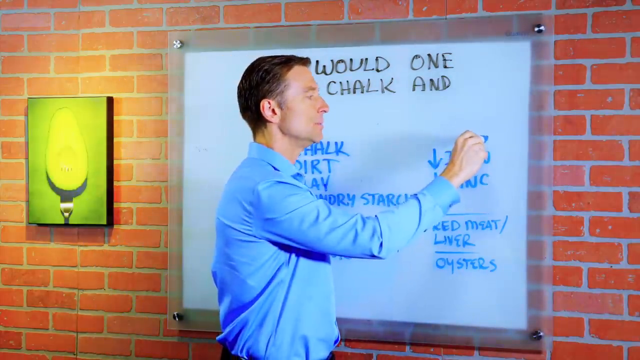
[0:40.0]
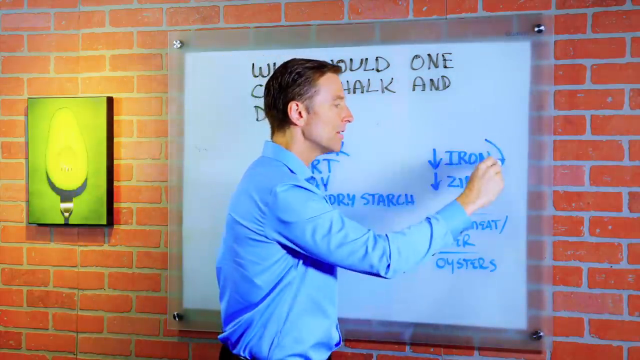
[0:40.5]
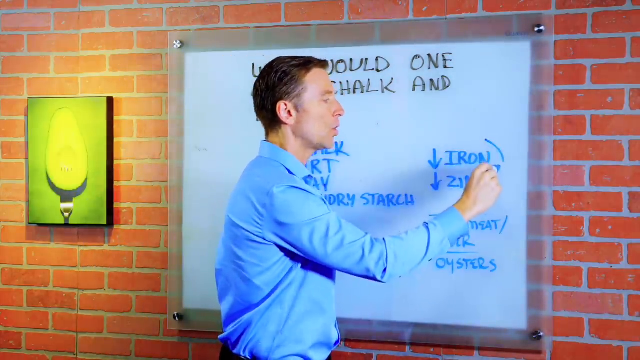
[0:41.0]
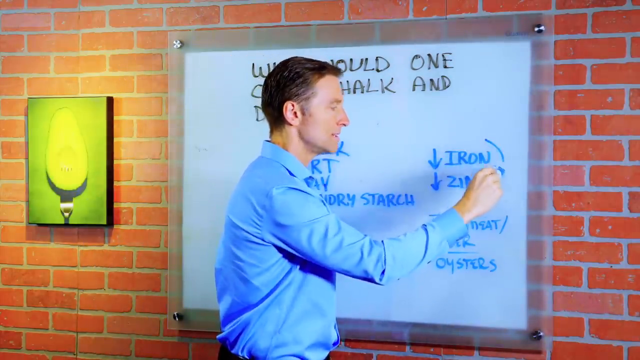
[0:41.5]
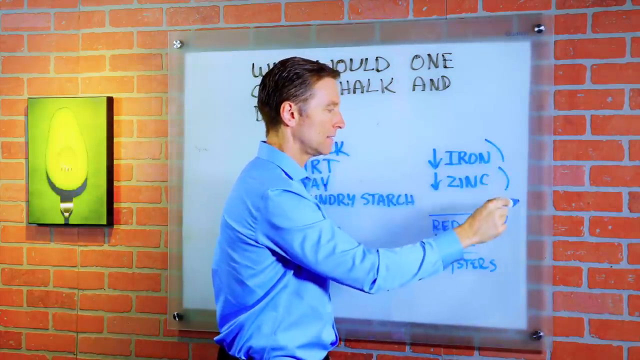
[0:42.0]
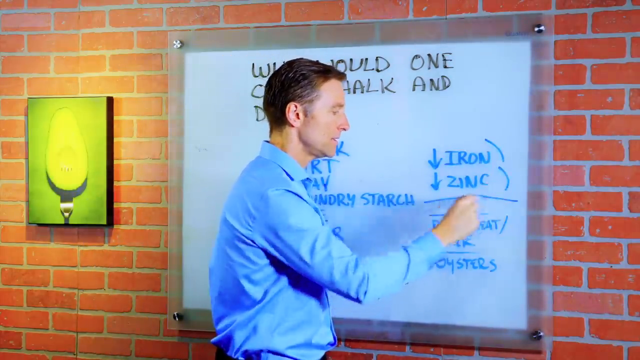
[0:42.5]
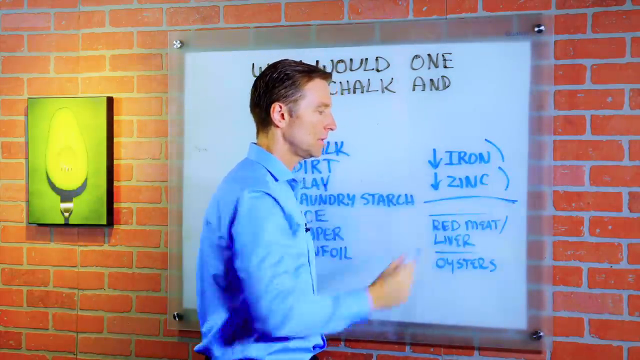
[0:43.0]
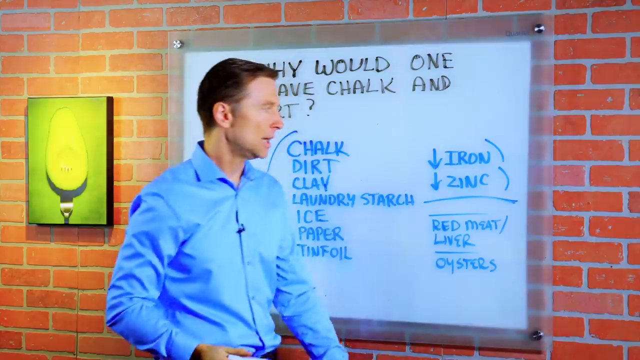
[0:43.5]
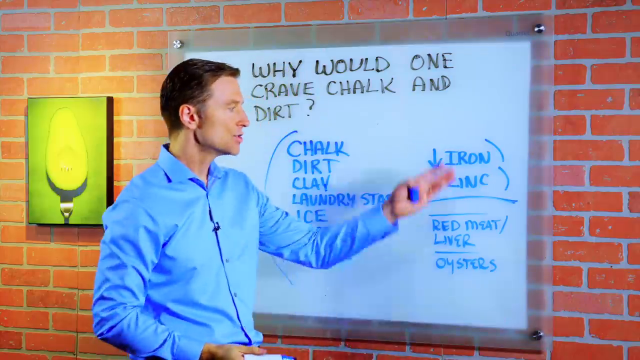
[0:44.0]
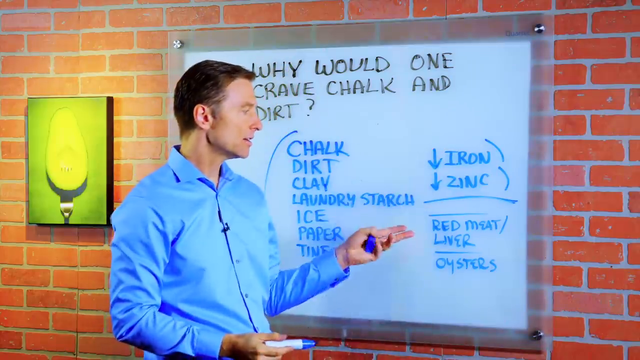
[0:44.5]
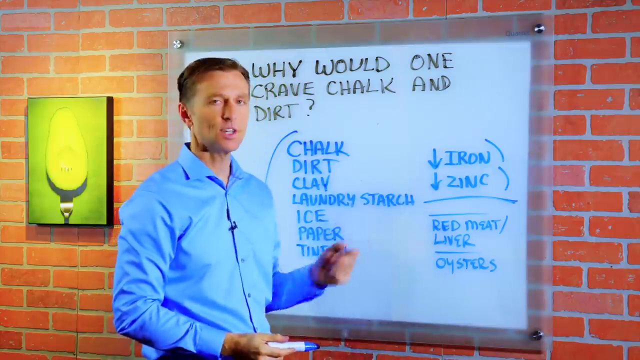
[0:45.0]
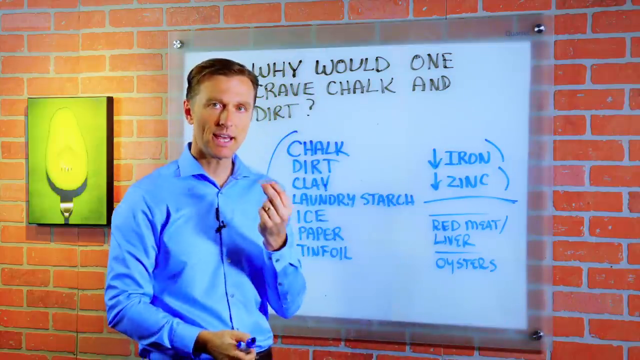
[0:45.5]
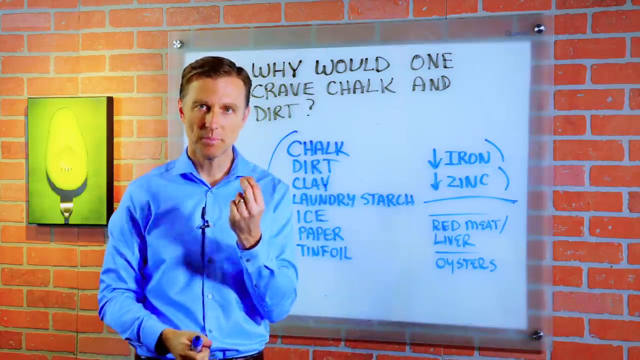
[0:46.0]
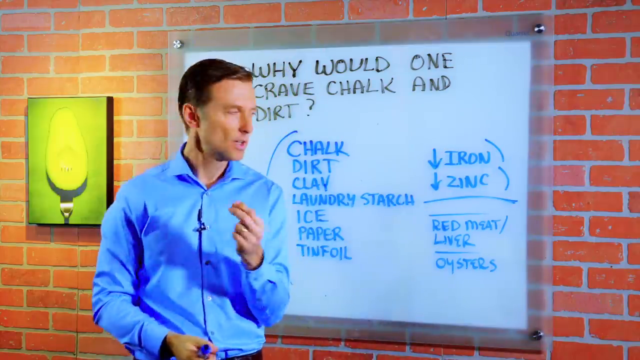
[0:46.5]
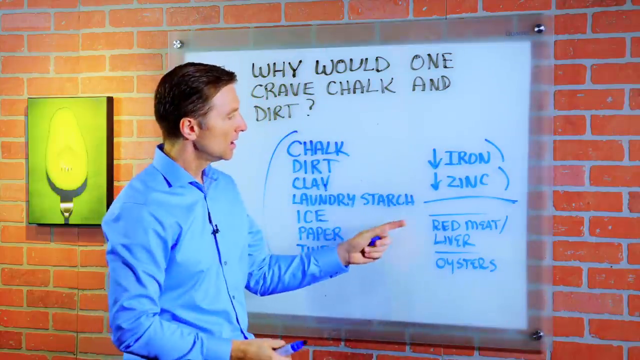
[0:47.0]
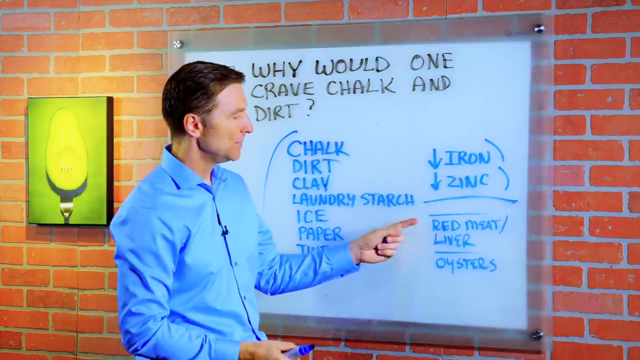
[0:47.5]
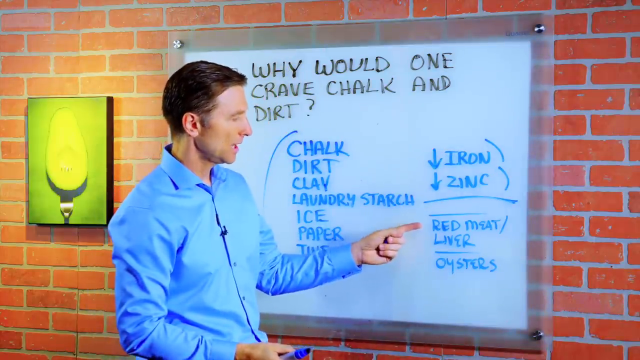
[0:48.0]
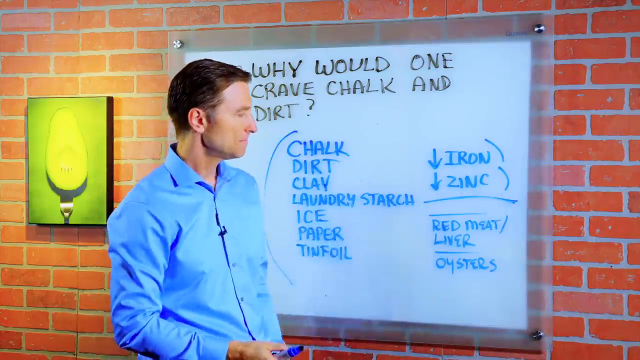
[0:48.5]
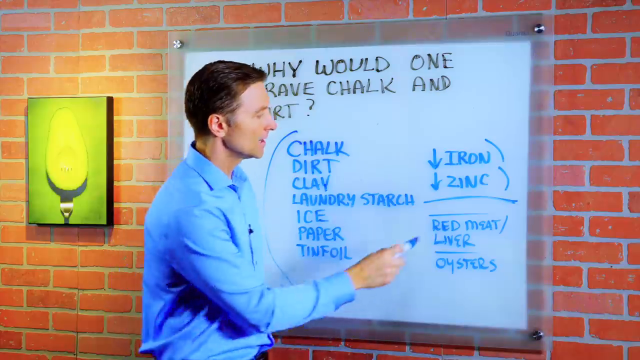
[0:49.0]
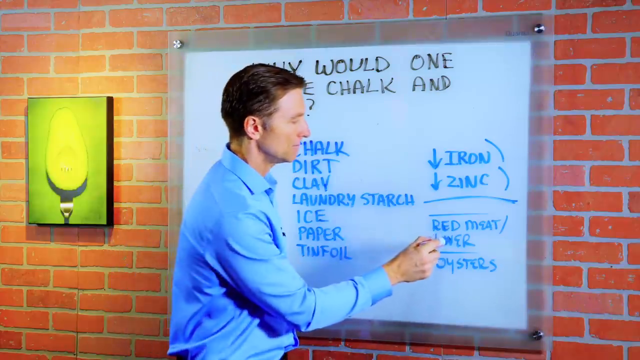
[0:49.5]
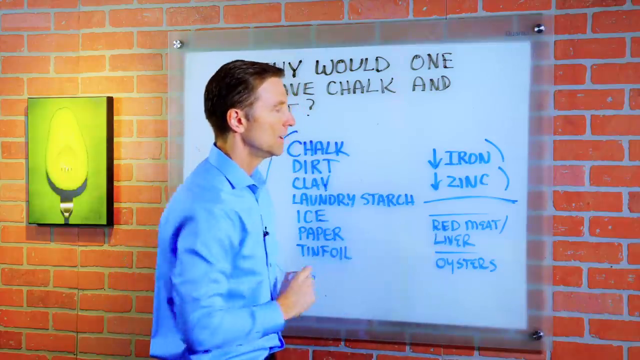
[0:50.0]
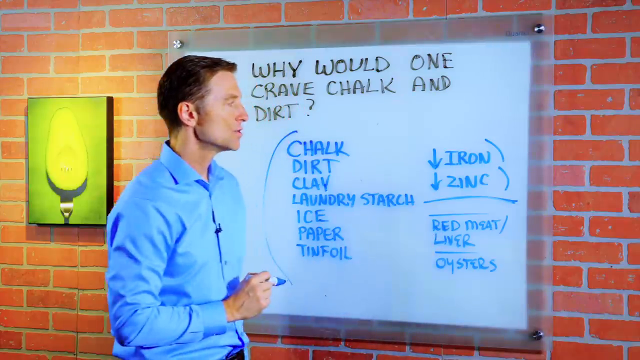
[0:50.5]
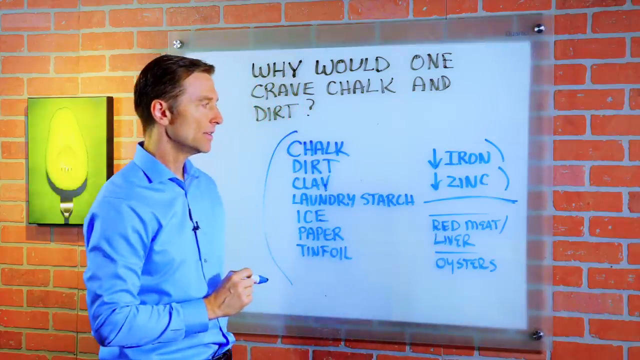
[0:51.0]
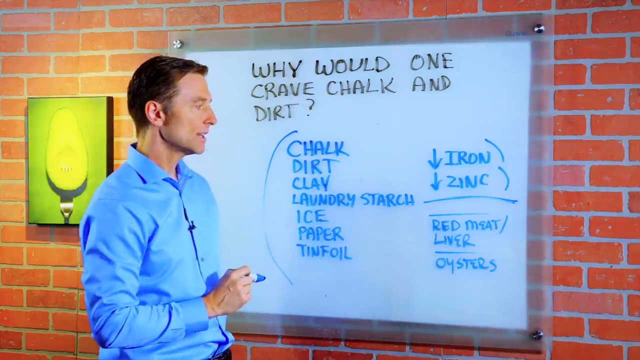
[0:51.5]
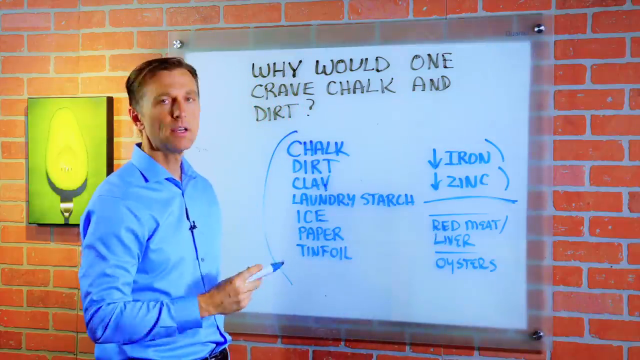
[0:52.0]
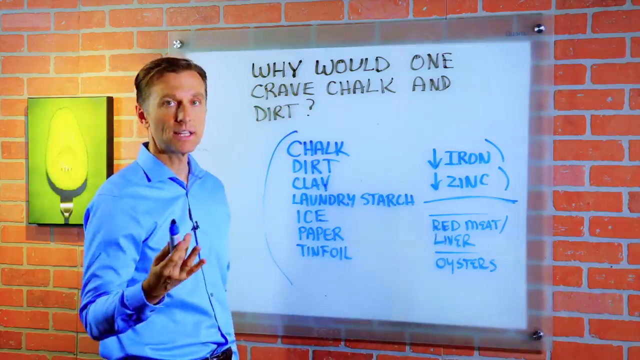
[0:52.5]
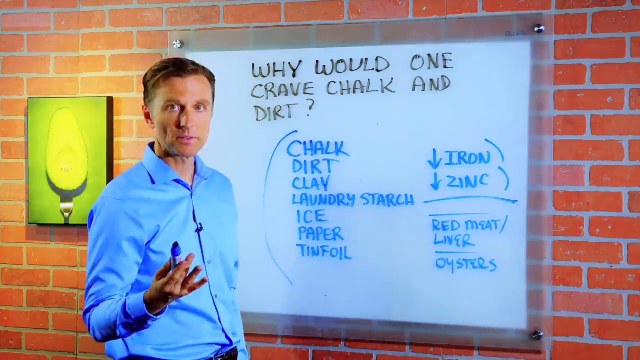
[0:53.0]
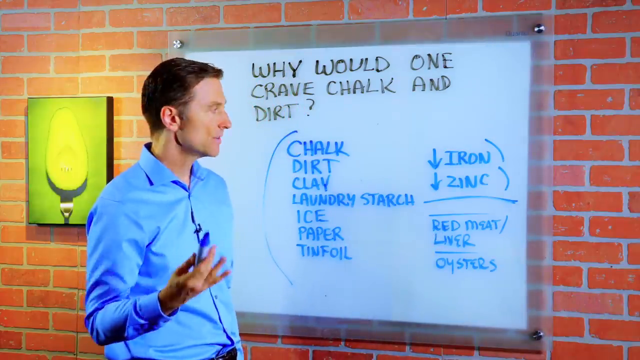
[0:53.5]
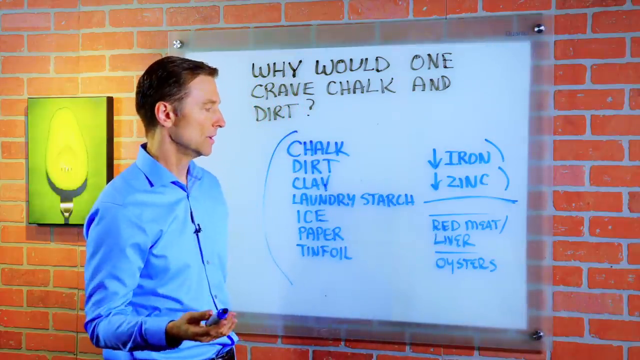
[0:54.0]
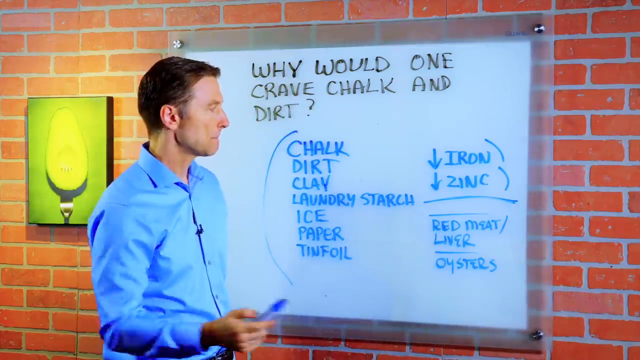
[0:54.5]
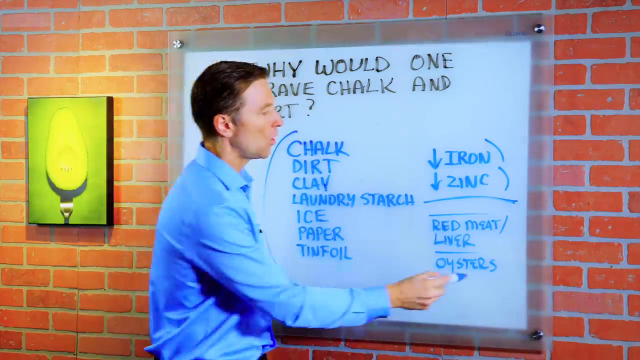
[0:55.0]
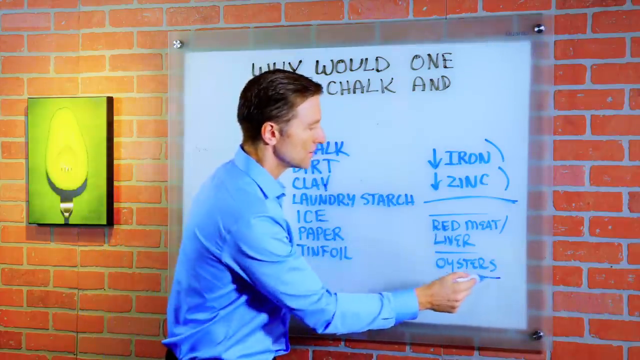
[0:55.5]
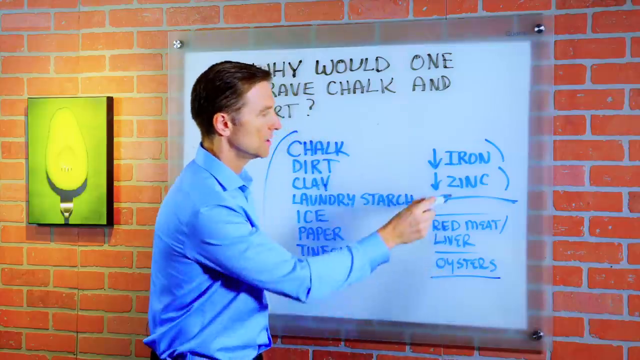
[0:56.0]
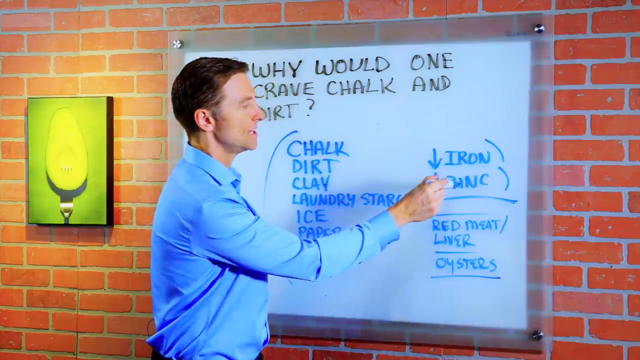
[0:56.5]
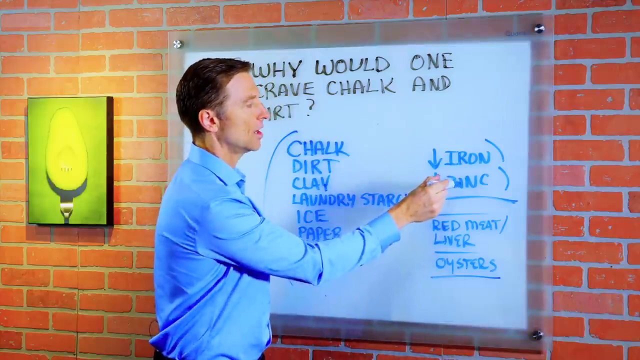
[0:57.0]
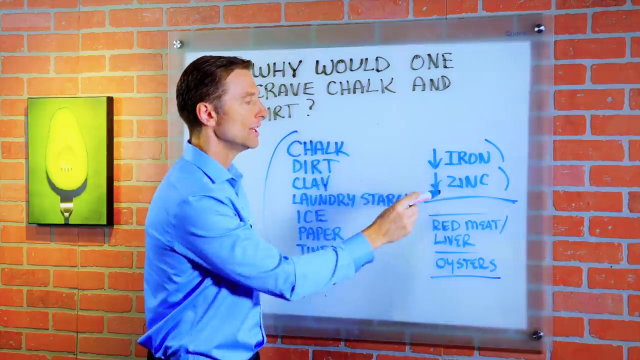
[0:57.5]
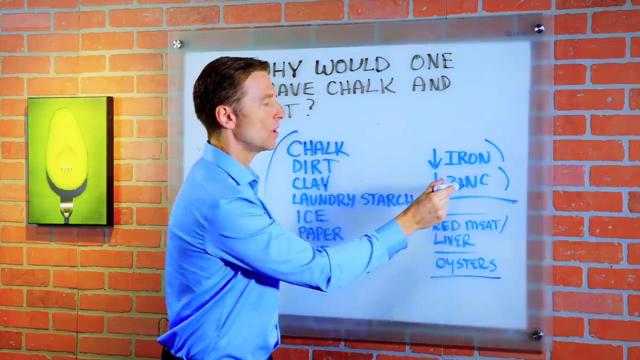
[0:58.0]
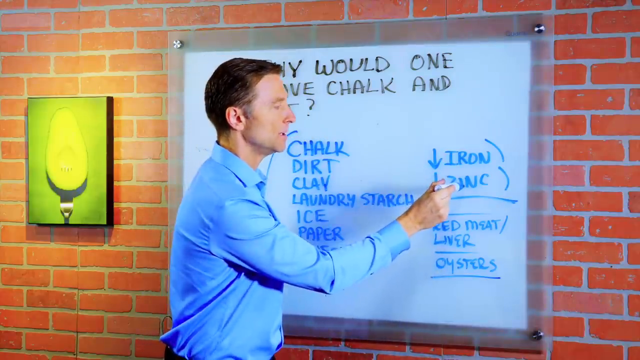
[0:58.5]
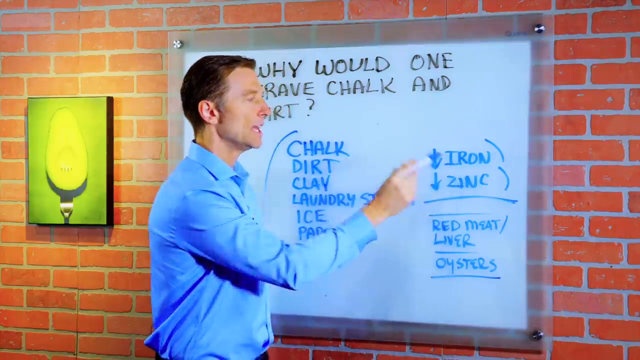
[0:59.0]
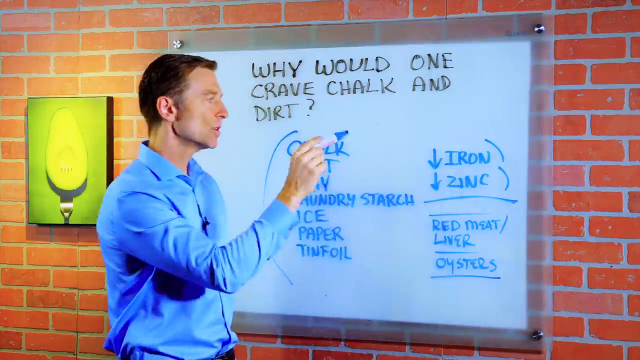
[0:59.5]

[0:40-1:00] A man in a blue collared shirt stands in front of a brick wall with a whiteboard directly behind him. He appears to take a blue marker and add some lines to the whiteboard, then uses his hands to go over different areas of it. At the top, in black writing, it says "Why would one crave chalk and dirt?" The man speaks into the camera while going over and pointing to different areas on the whiteboard, adding more lines as he goes. On the brick wall behind the whiteboard there is a small green picture of what looks to be an avocado on a silver fork.